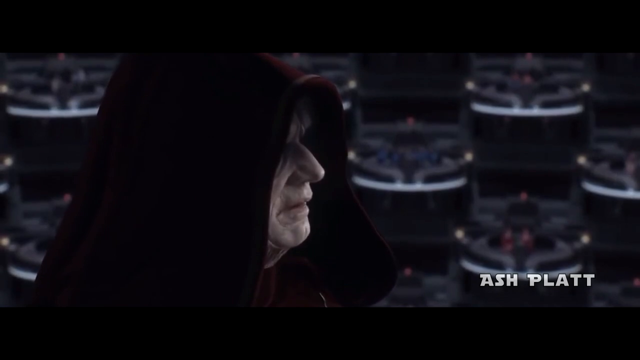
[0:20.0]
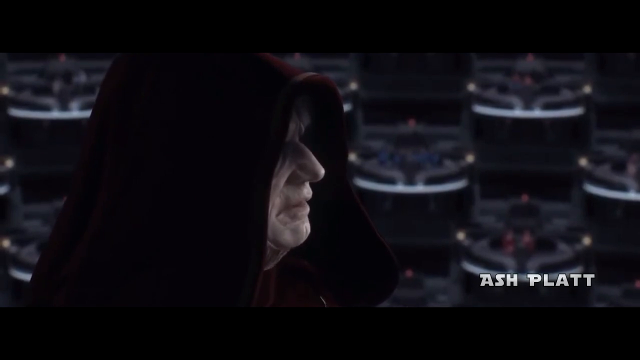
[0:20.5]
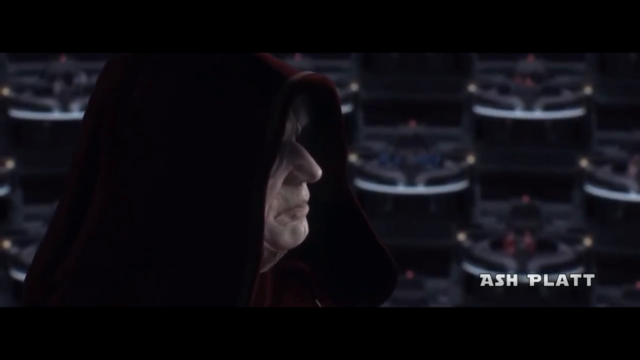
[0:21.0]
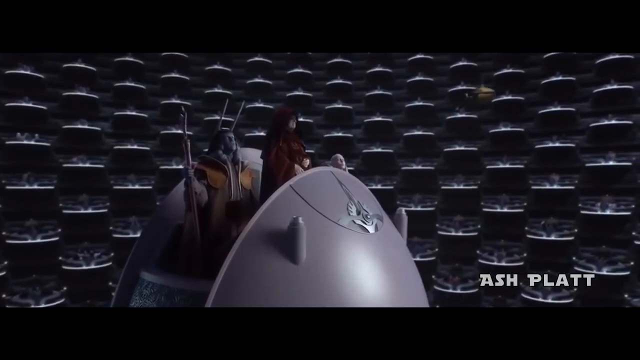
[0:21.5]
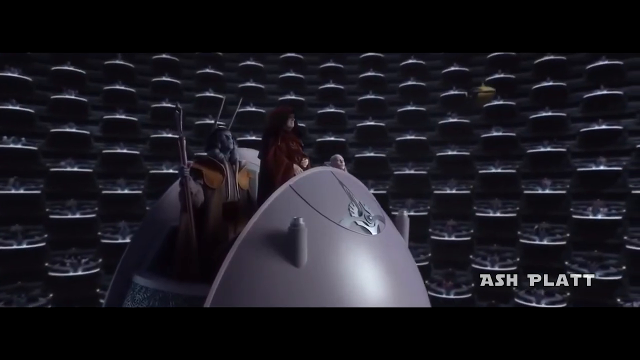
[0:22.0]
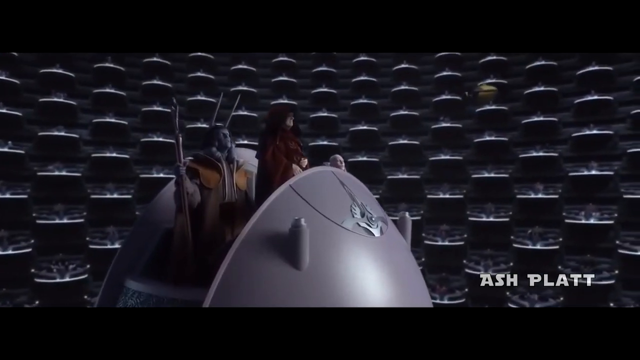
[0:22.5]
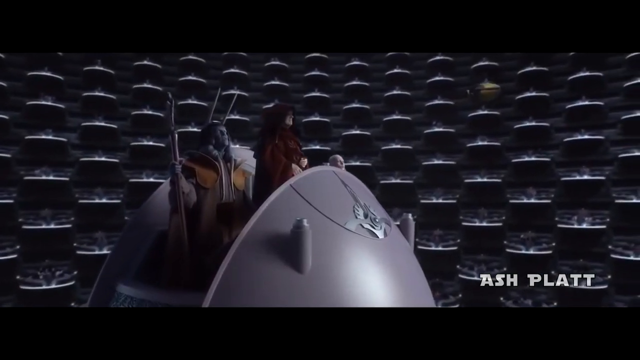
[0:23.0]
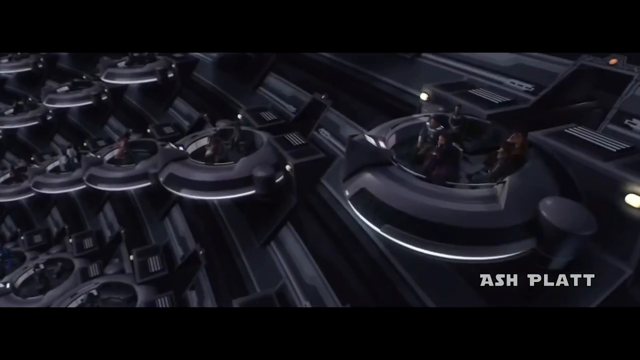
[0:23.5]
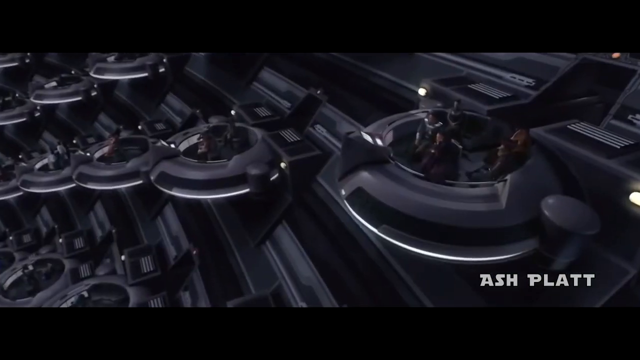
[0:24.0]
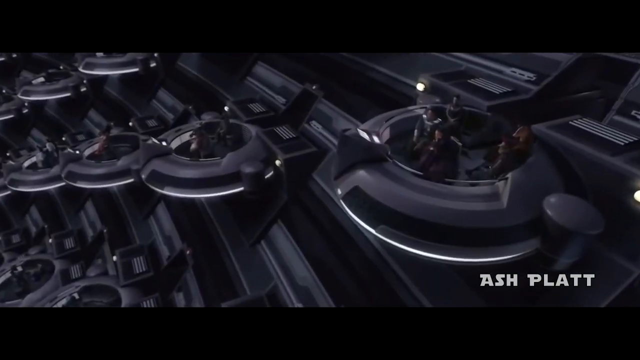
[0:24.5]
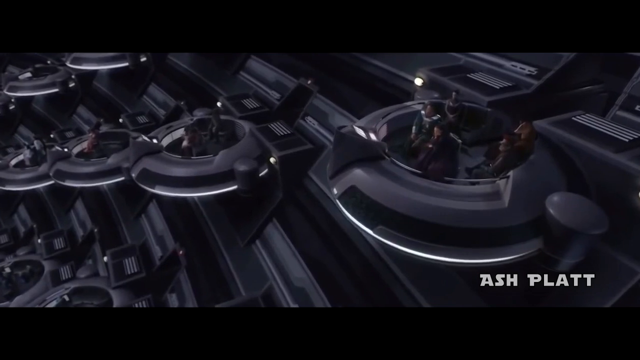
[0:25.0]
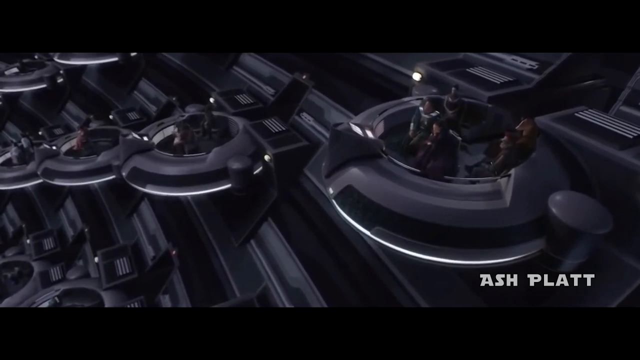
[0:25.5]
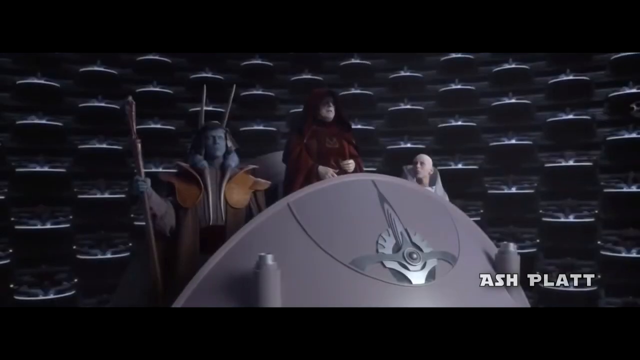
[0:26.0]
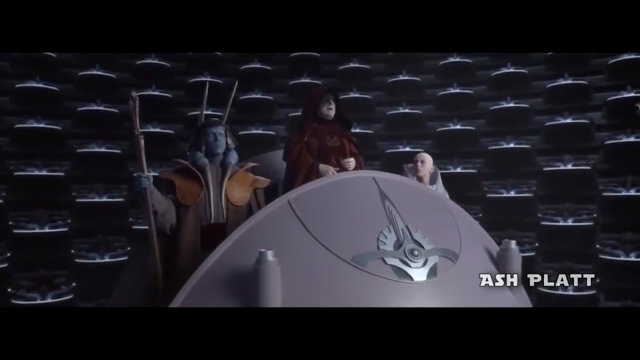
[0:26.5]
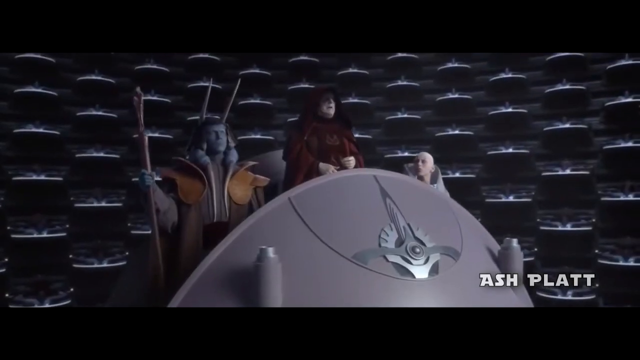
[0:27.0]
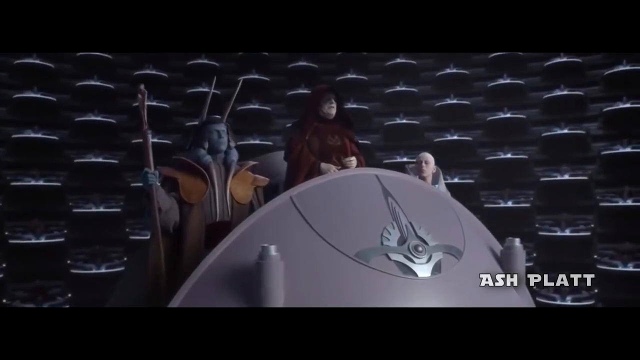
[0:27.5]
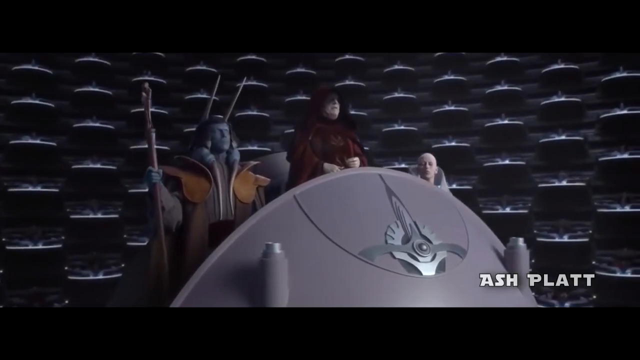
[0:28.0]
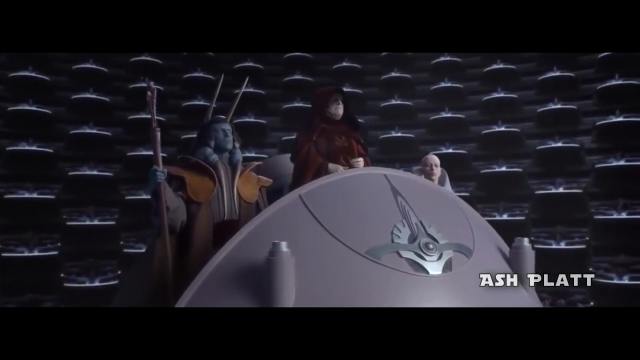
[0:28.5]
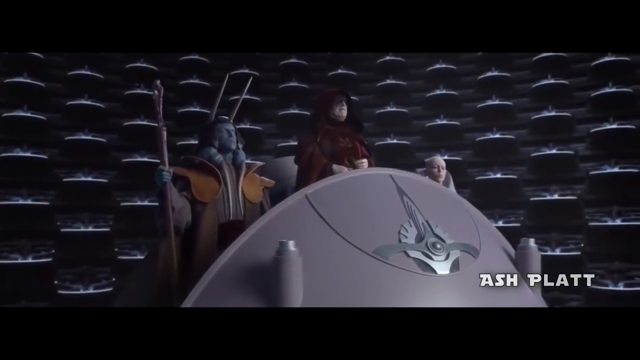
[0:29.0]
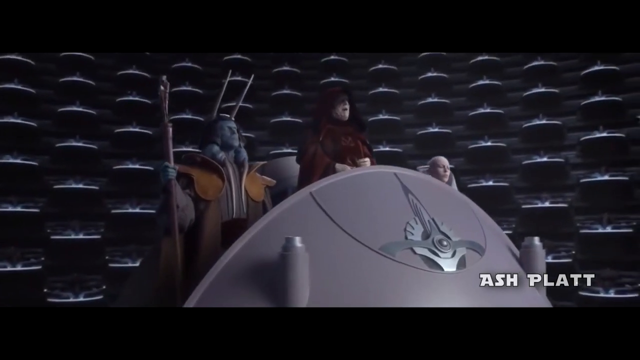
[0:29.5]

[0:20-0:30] A pale man in a red robe and hood speaks in a close-up on his face. The video zooms out to show the man standing on top of a chamber-like pod, then zooms to the crowd listening to him, seated in pod-like circular shapes. The video pans back to the central man in the red robe, with two figures behind him: one pink and bald, the other grey and wearing a brown robe. The video pans down as the man continues talking.